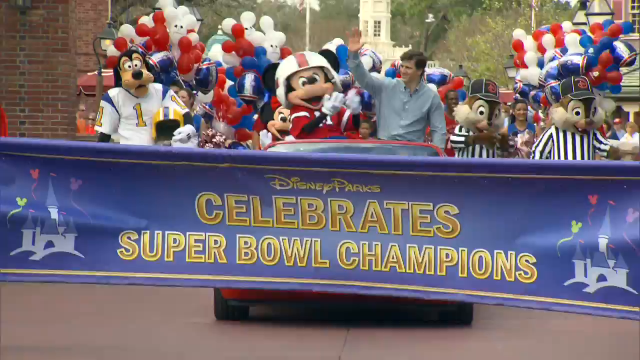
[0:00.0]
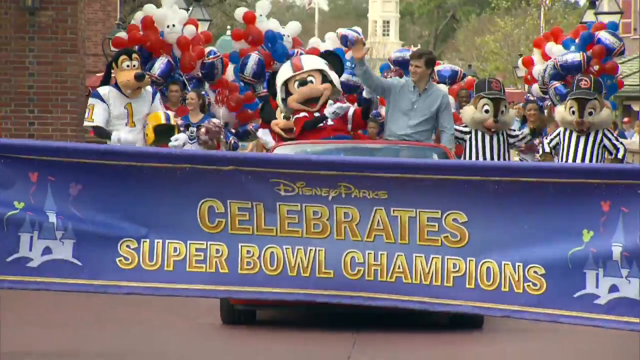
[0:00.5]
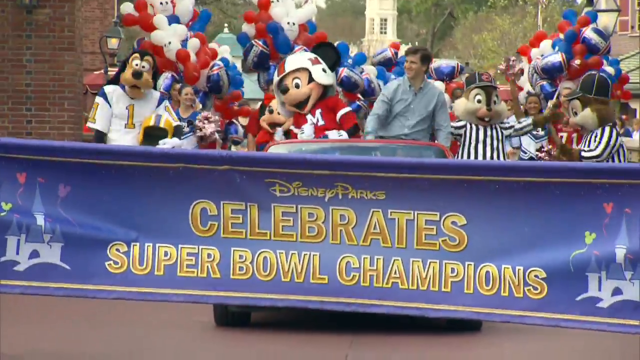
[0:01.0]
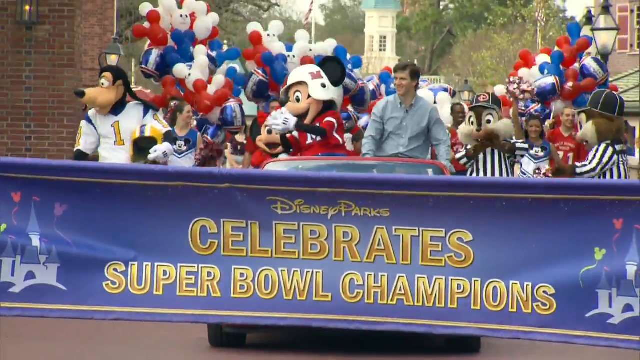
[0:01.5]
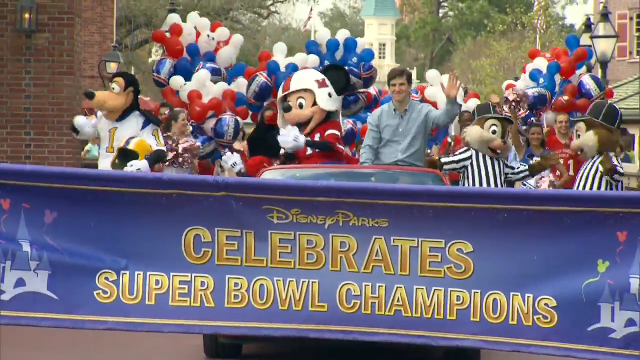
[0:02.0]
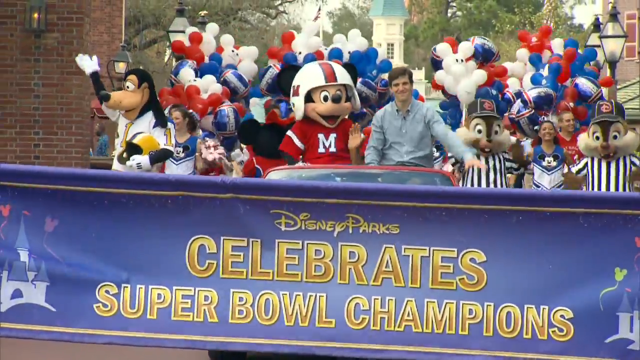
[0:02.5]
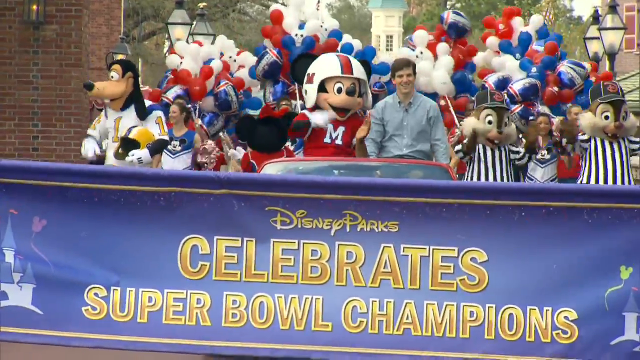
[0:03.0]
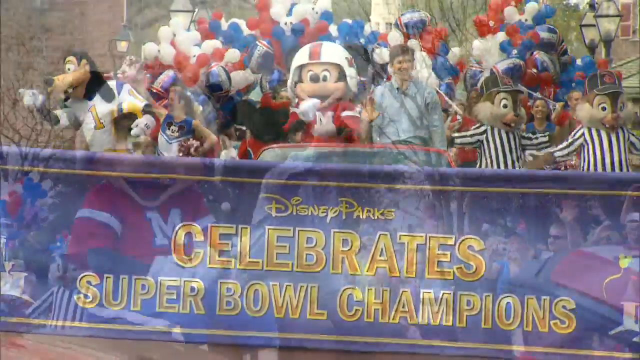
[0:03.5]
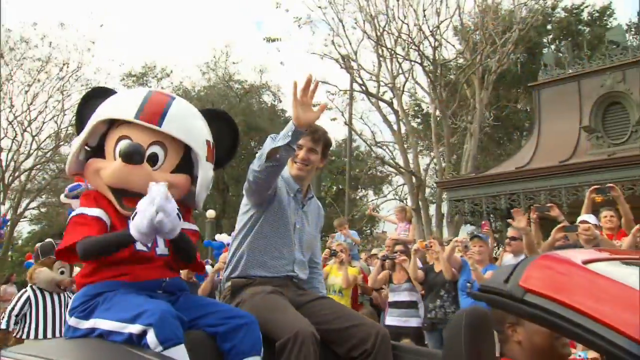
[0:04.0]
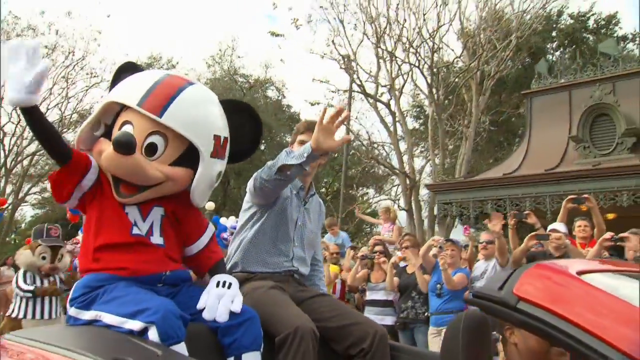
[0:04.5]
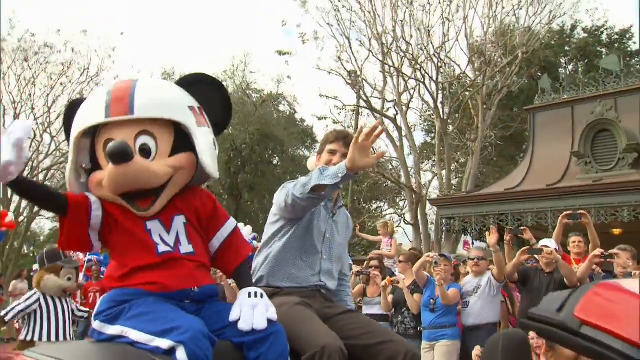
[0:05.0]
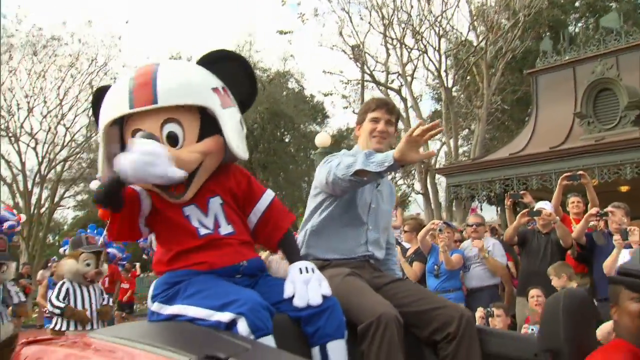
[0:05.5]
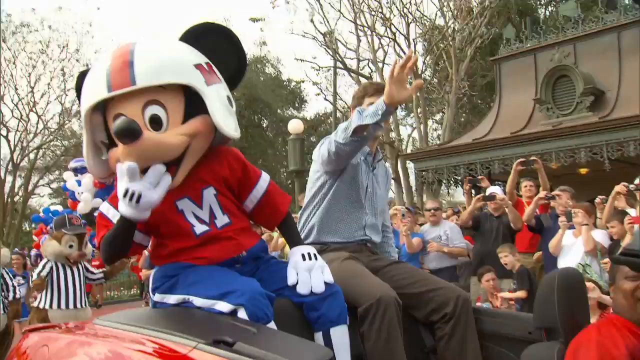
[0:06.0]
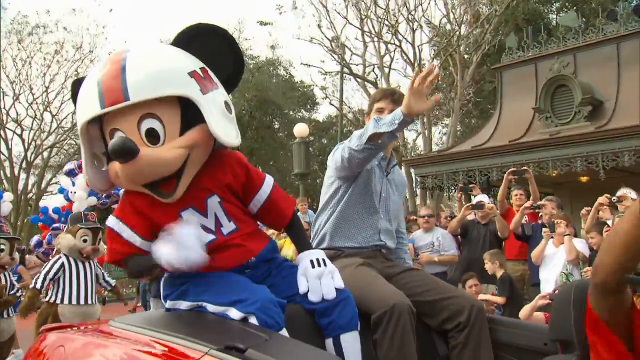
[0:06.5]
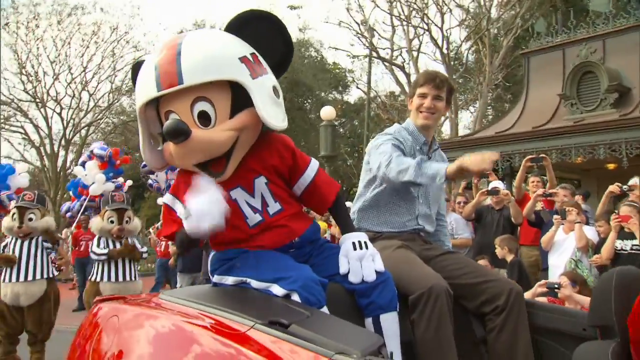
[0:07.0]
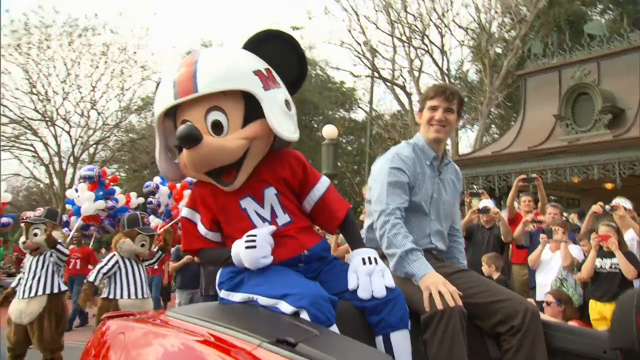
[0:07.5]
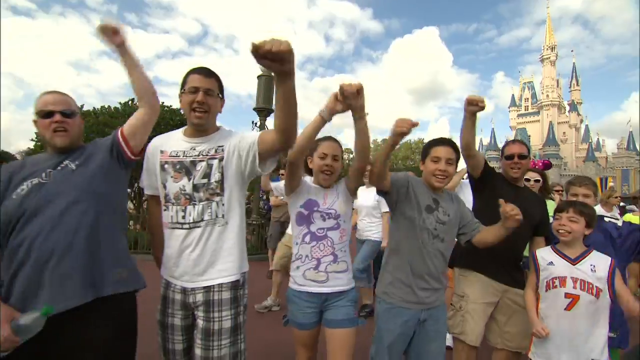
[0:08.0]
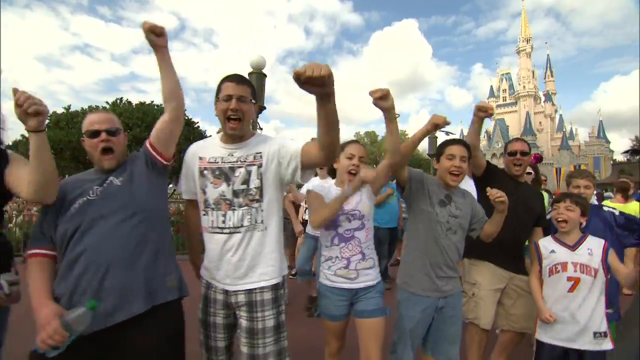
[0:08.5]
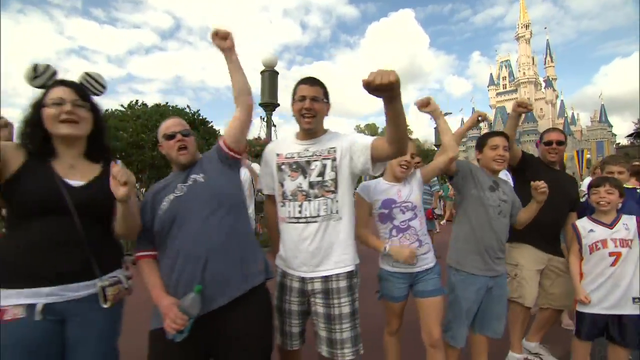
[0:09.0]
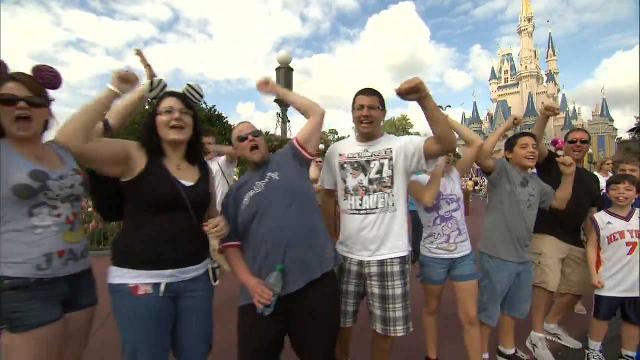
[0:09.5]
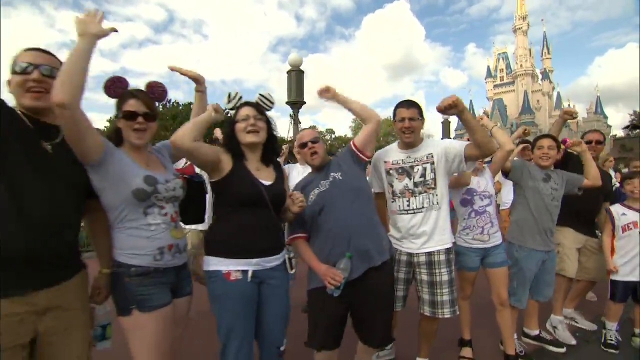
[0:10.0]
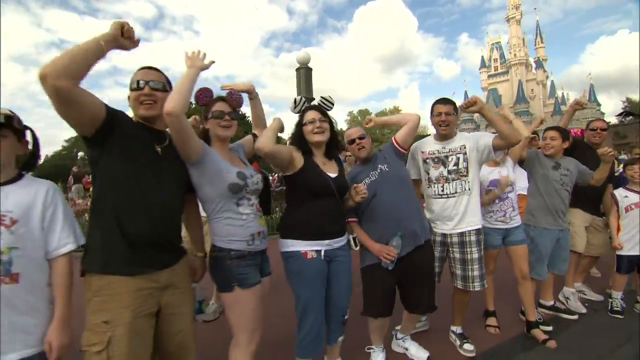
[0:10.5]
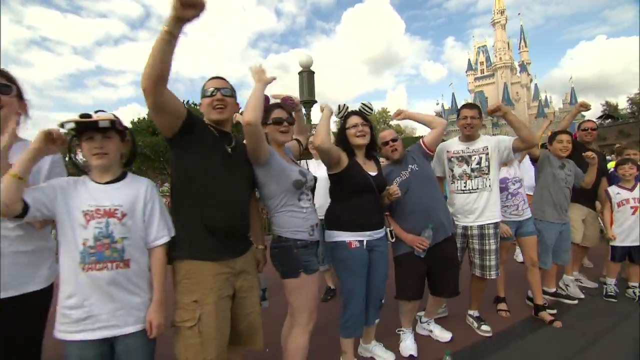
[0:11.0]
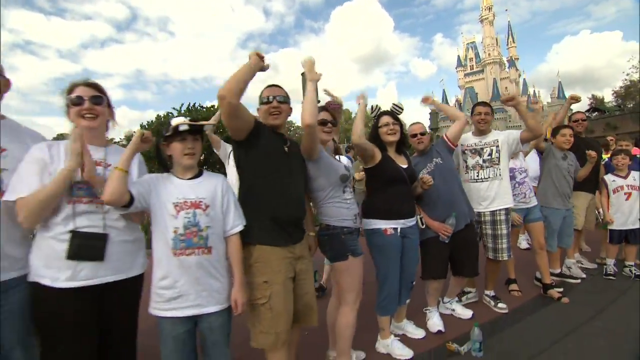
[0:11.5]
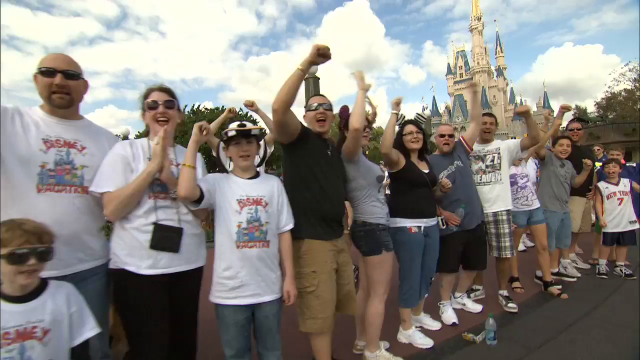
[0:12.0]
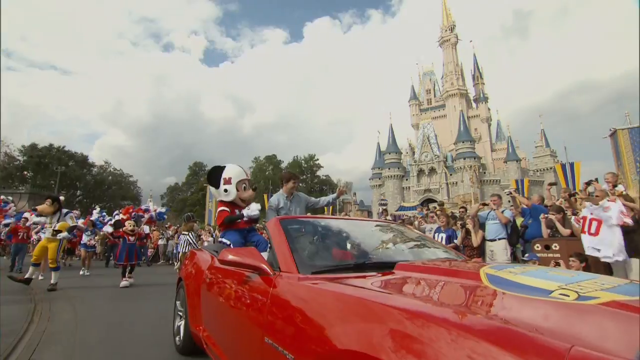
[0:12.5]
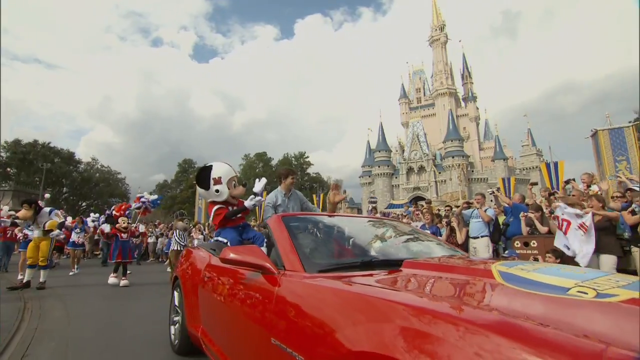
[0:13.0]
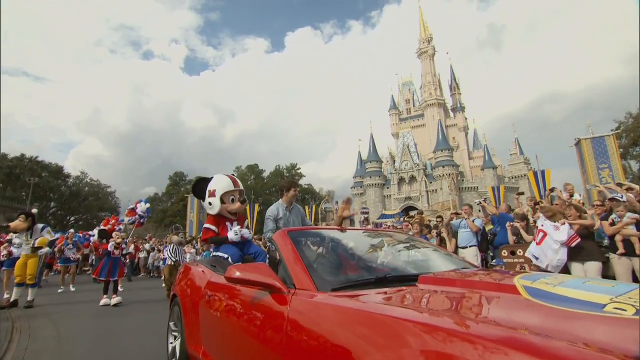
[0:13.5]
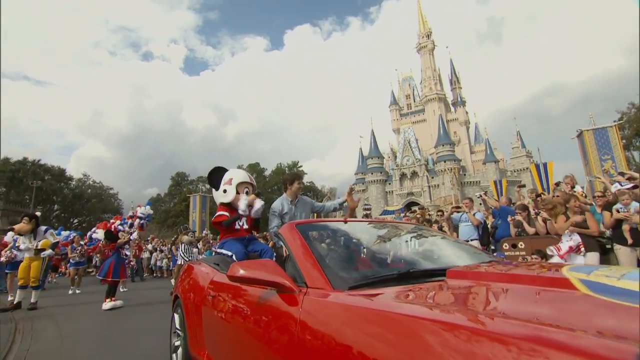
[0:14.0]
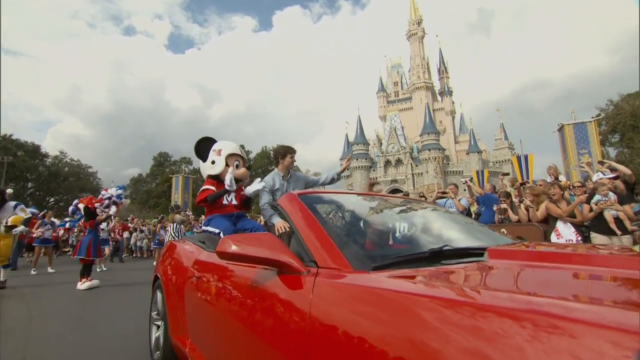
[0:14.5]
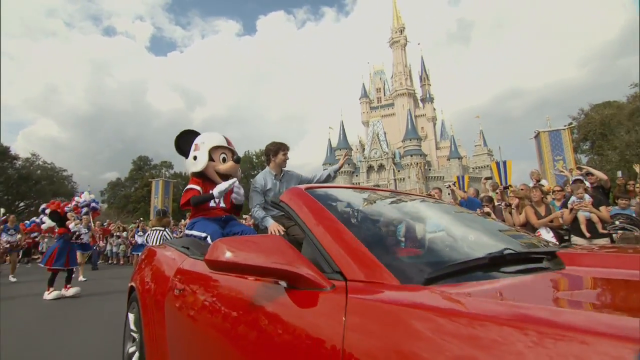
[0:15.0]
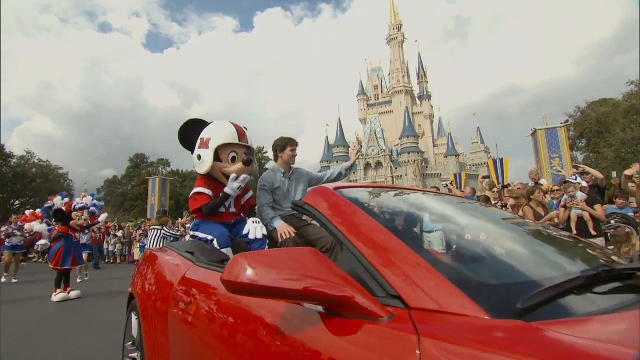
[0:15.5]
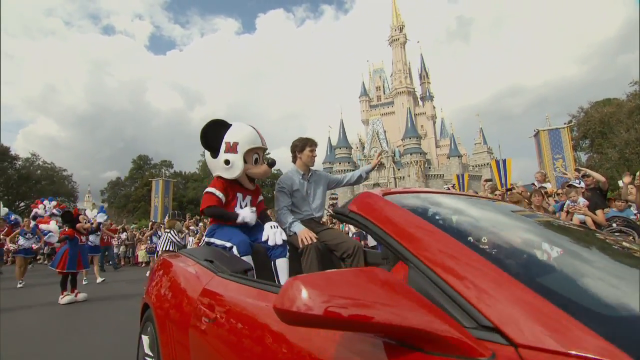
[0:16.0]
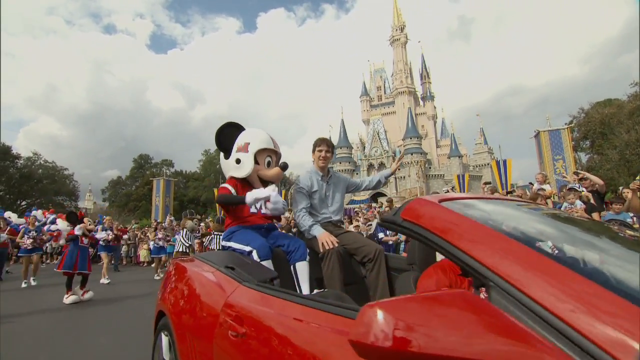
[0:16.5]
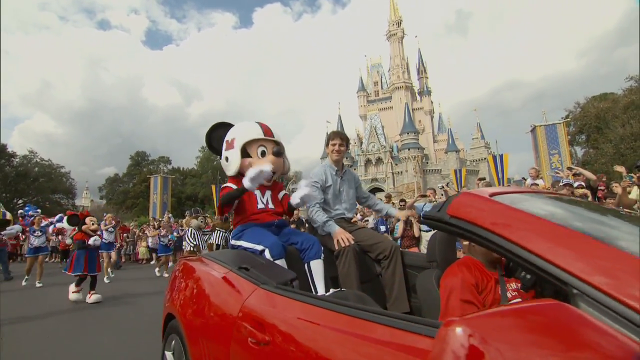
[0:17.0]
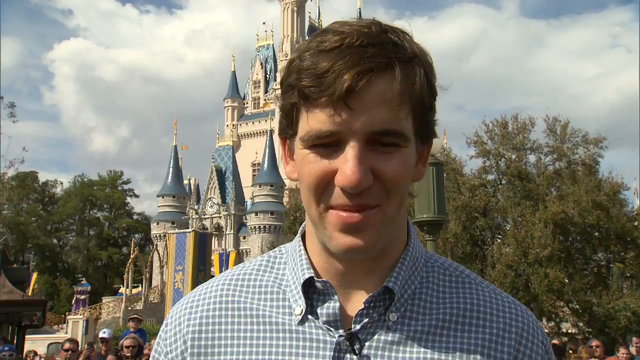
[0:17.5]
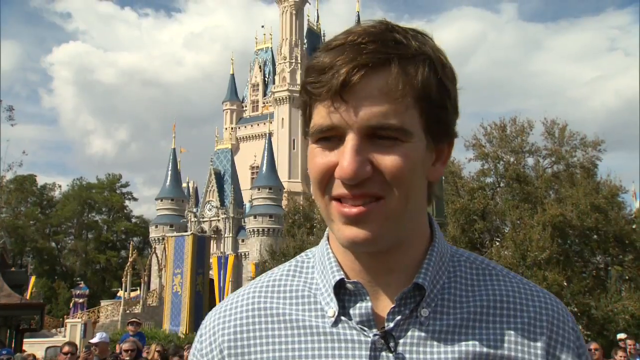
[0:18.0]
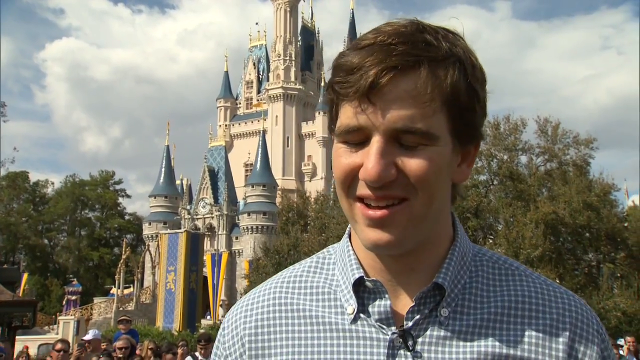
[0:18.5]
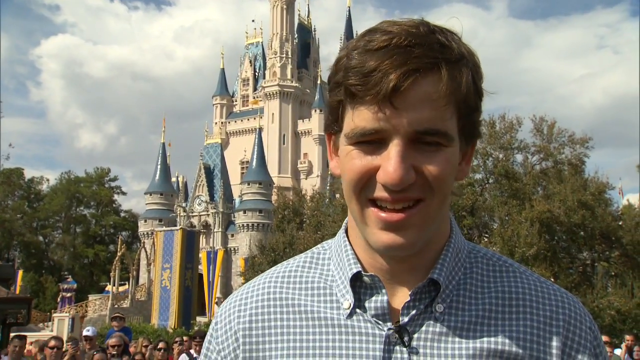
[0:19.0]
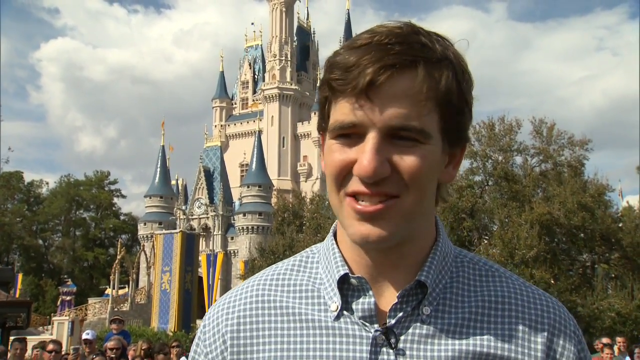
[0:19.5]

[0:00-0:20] An outdoor parade opens with a long banner at the front that says "Disney Park Celebrates Super Bowl Champions." Behind it is a vehicle carrying Eli Manning, who waves, with Mickey Mouse dressed in a football outfit next to him. Other characters such as Goofy and some squirrel-type characters appear, with many red, white, and blue balloons behind them as they proceed. The camera angle changes to a view from the right, showing Mickey and Eli Manning continuing to wave and gesture to the crowd. People standing on the side pump their fists and say things; there is a good balance of adults and children standing there. The red vehicle with Eli Manning and Mickey Mouse is seen again with the Magic Kingdom in the background. Eli Manning is then shown standing and being interviewed, talking to someone as the camera points at him.